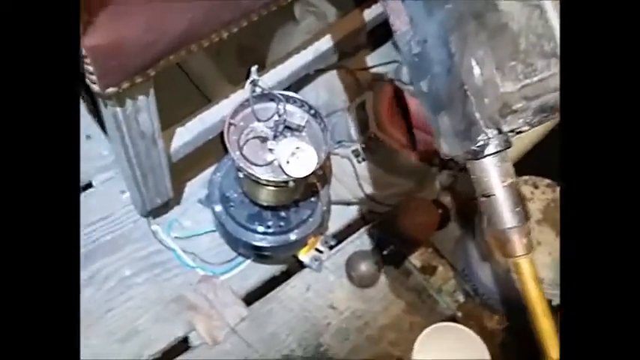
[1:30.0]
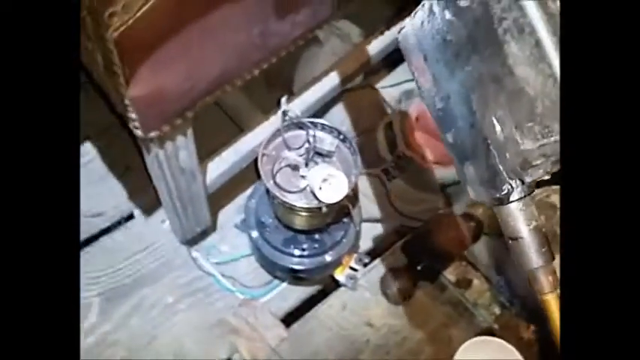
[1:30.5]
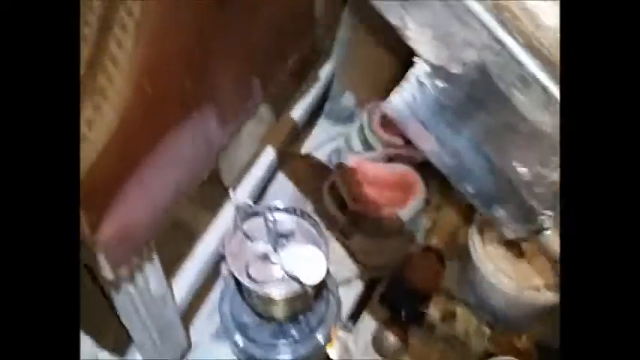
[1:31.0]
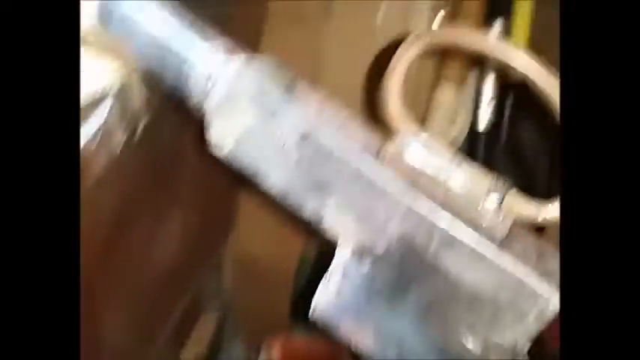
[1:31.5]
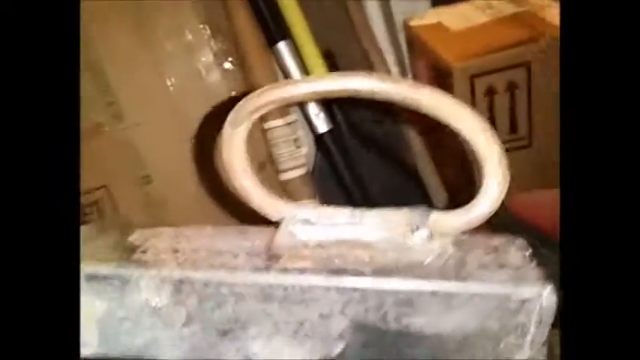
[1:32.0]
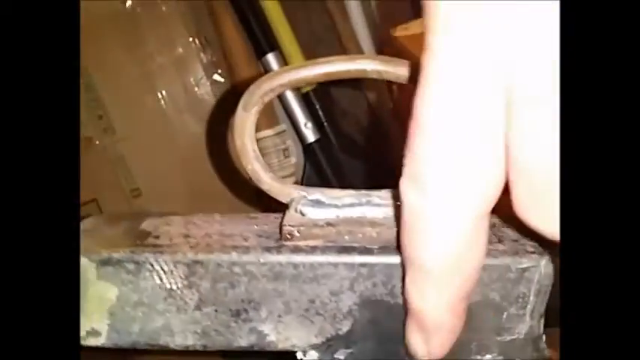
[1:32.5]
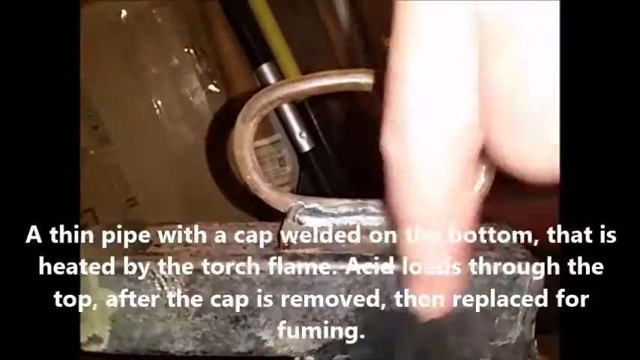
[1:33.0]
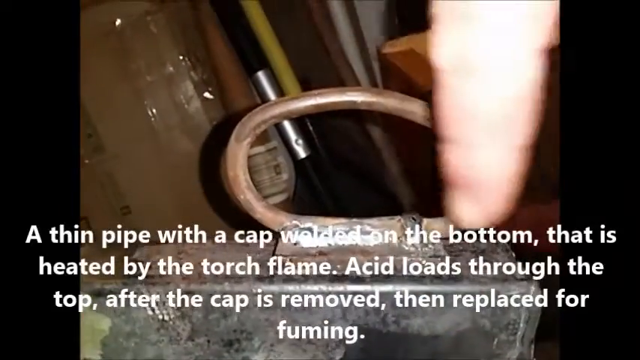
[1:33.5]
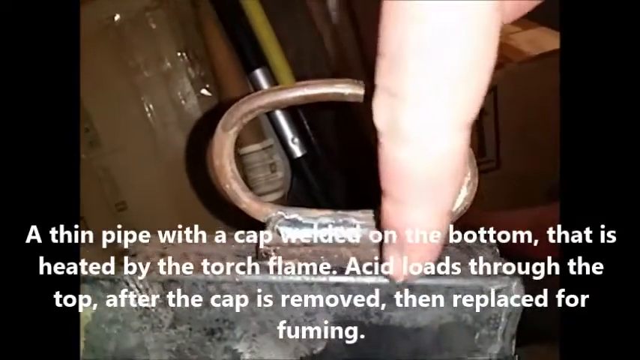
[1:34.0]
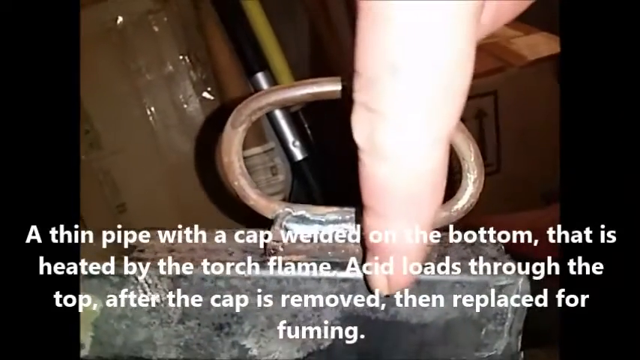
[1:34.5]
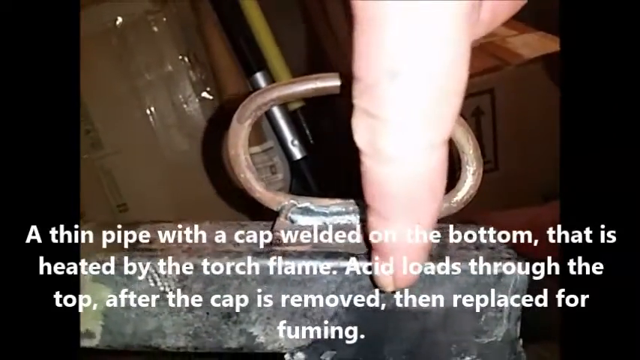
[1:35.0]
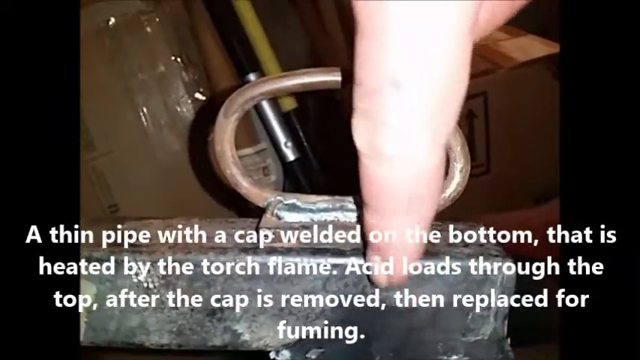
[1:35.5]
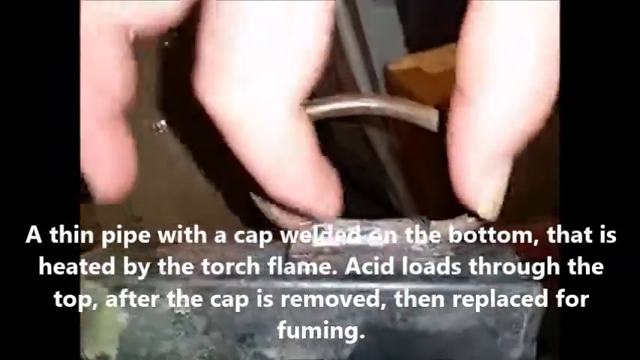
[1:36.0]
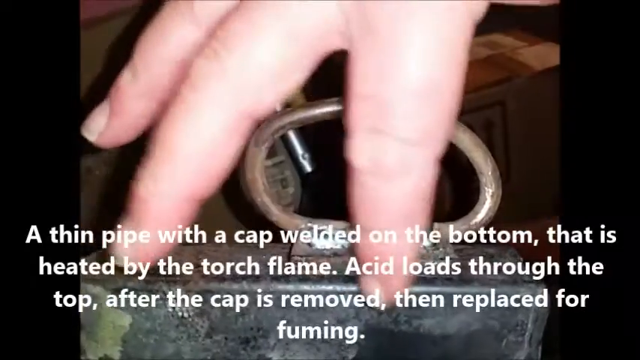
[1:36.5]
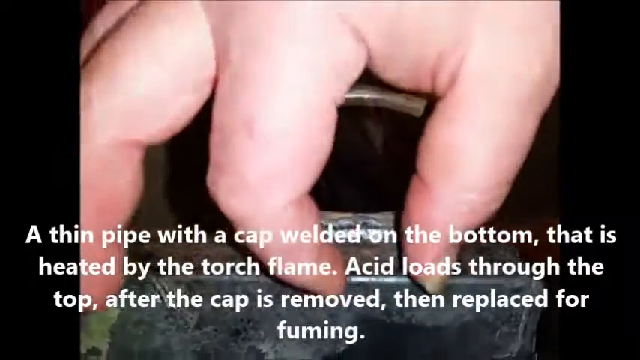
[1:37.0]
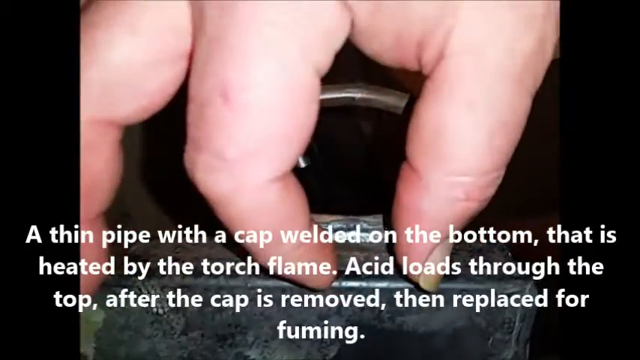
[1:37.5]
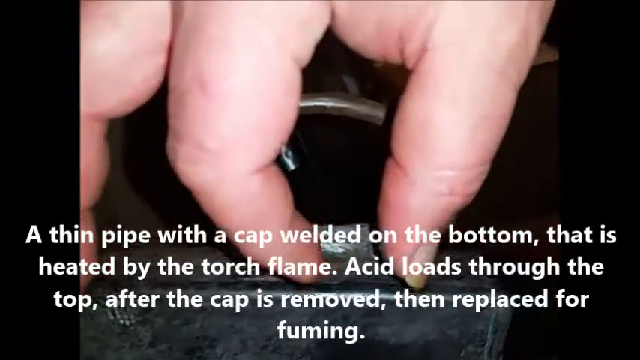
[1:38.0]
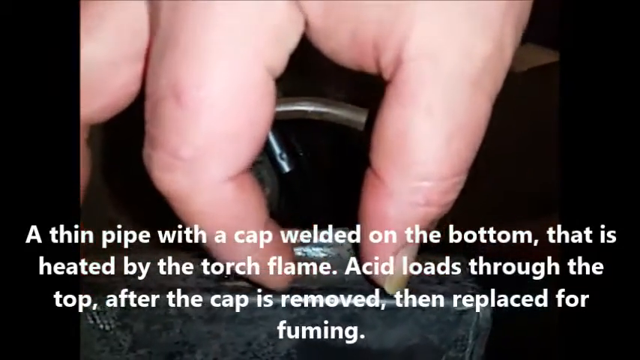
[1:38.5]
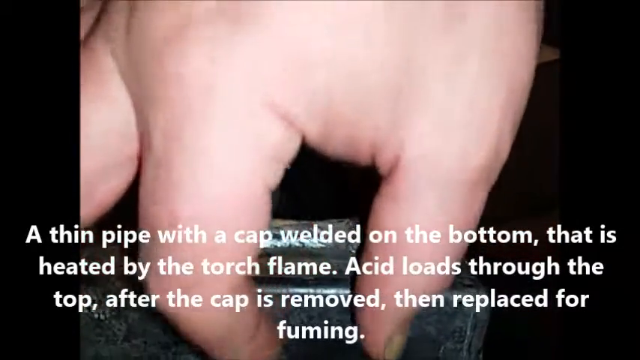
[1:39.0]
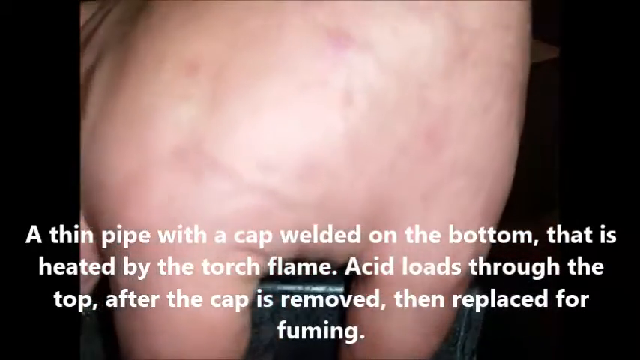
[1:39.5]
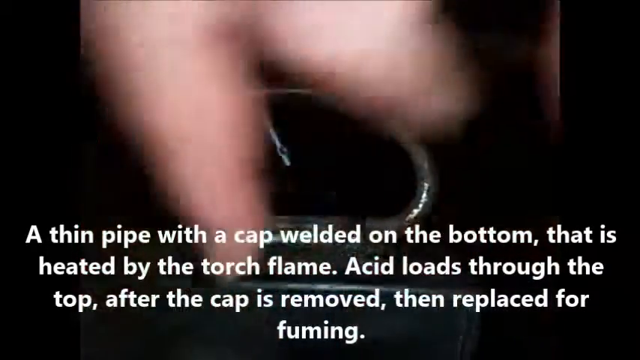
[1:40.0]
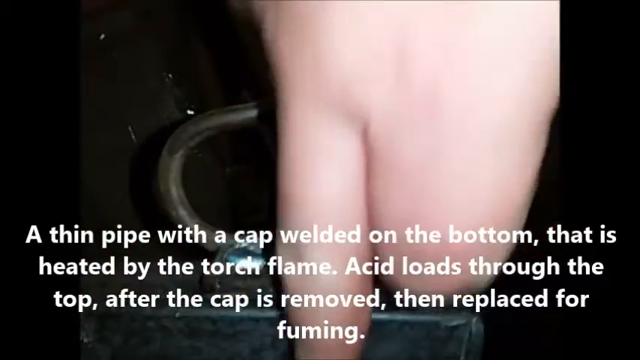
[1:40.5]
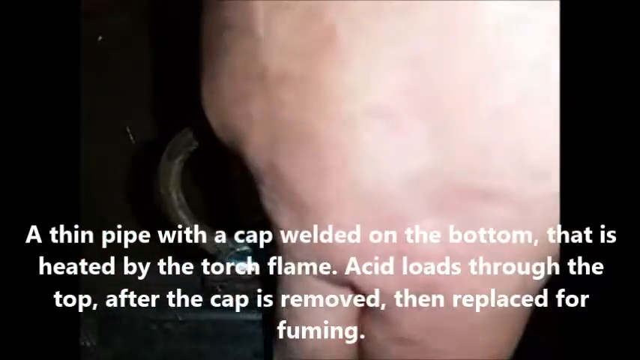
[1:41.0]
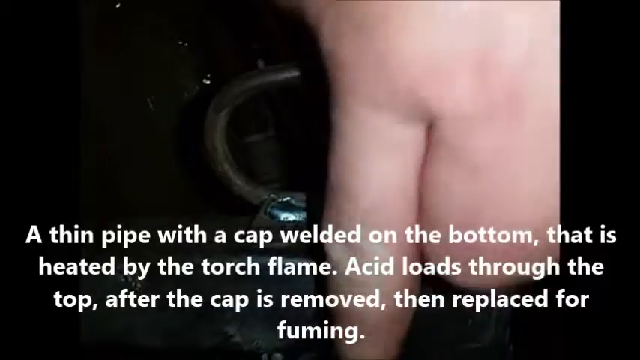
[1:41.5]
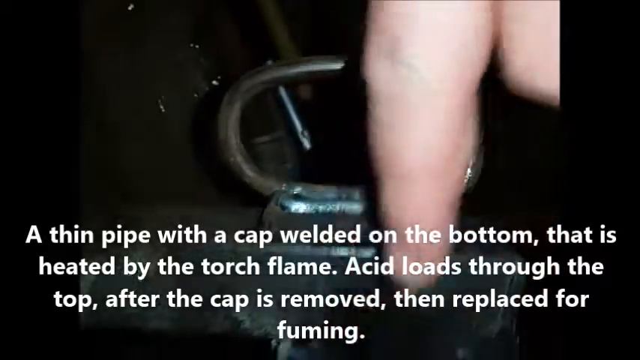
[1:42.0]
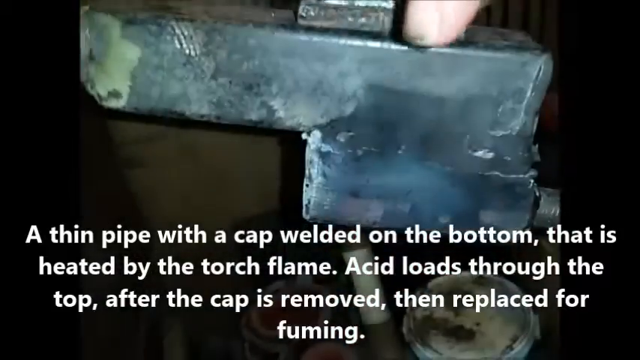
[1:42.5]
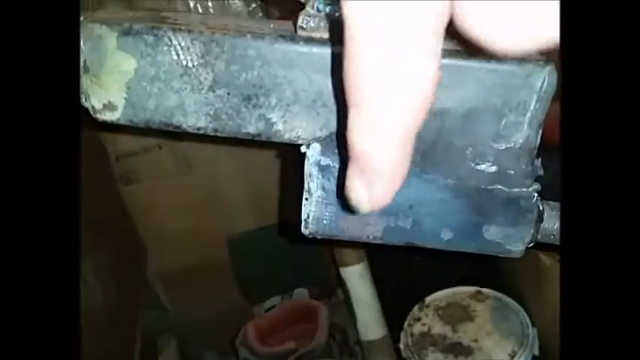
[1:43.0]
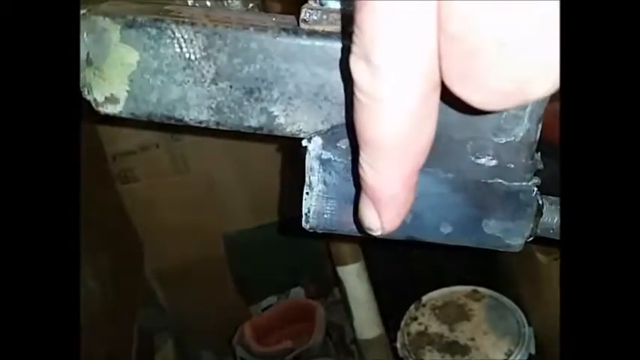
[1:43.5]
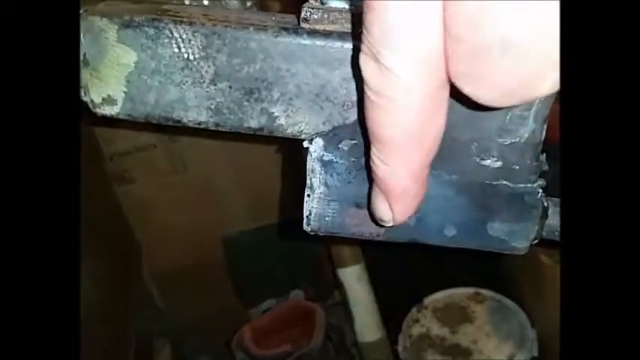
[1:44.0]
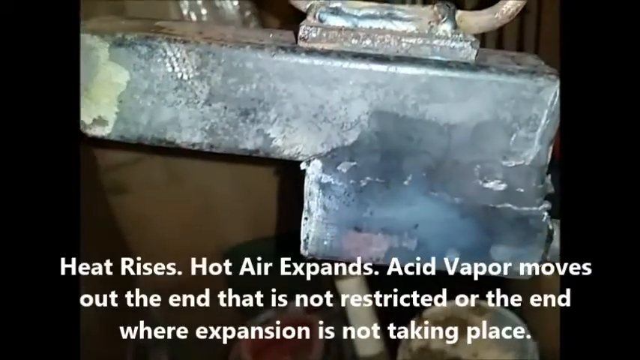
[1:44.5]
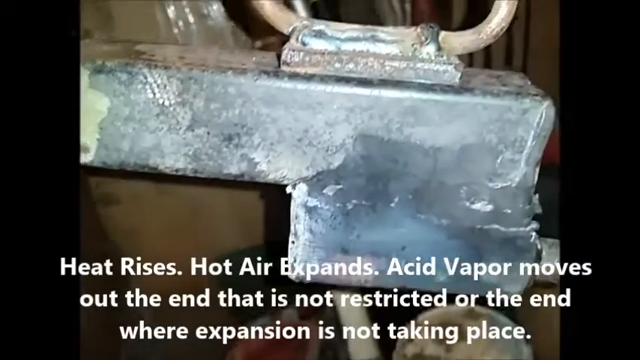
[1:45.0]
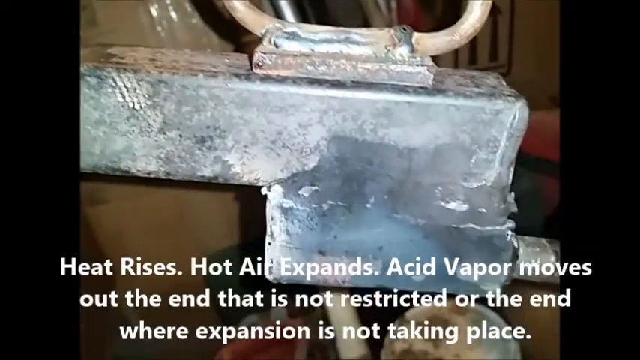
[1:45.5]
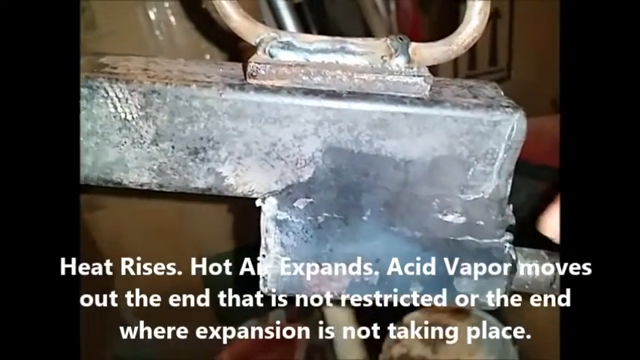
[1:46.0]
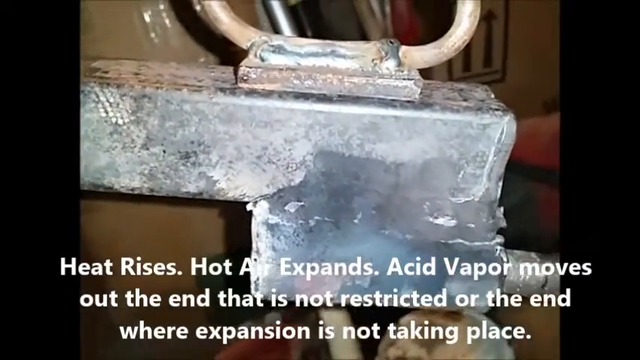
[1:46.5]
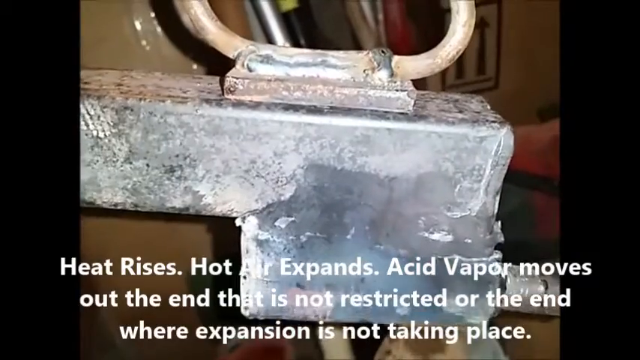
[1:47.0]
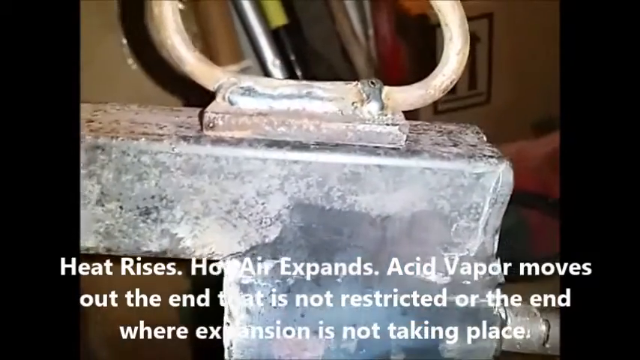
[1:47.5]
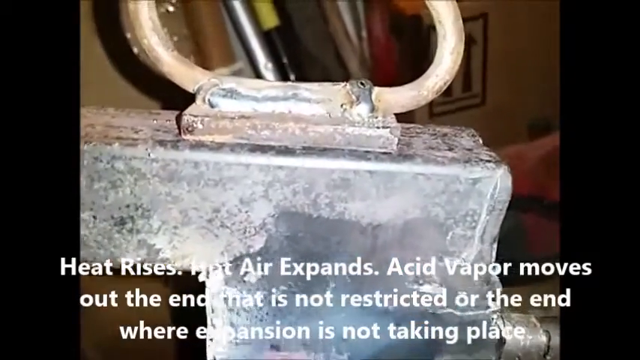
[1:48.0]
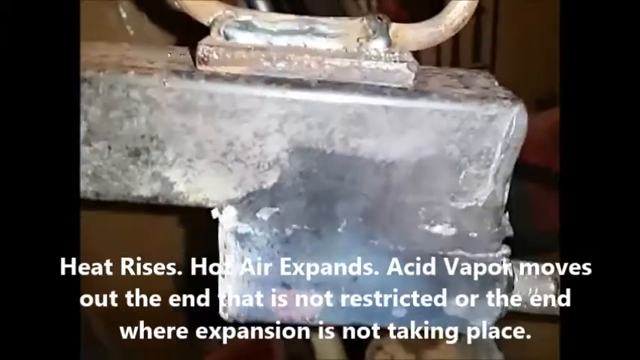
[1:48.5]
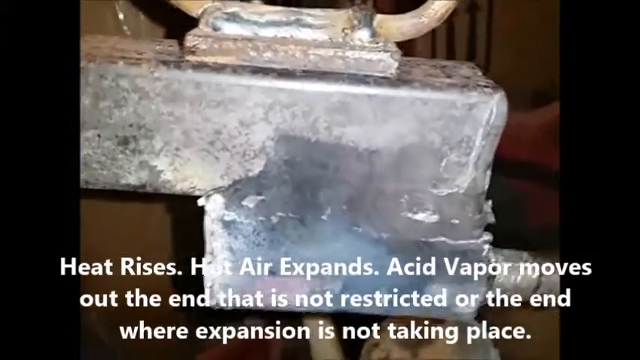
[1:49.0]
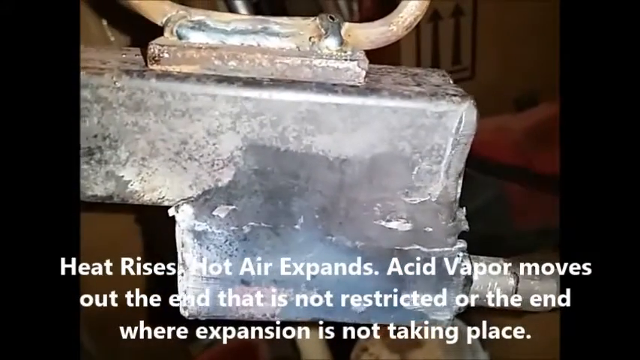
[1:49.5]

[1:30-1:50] Different items on the wooden floor are shown, and the shoes are visible at the very beginning. The person goes back to the cap, their hand visible, pointing down around the cap and then seemingly pointing down to the floor, apparently using their middle finger. The camera stays very close to the side of the contraption that is shooting the water vapor into the box. The subtitles read "A thin pipe with a cap welded on the bottom that is heated by the torch flame." and "acid loads through the top after the cap is removed then replaced for fuming." followed by "Heat rises. acid expands. Acid vapor moves out the end that is not restricted or the end where expansion is not taking place."